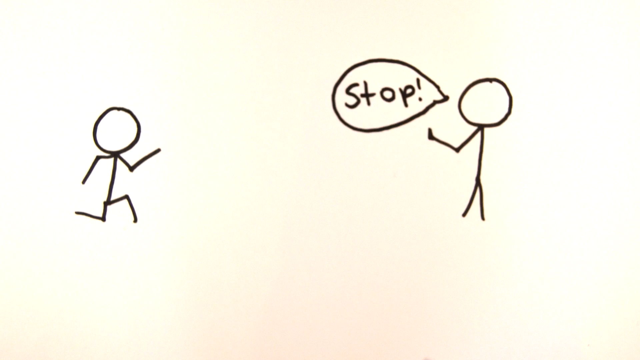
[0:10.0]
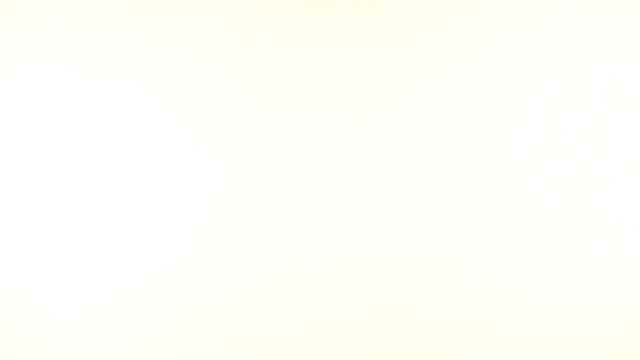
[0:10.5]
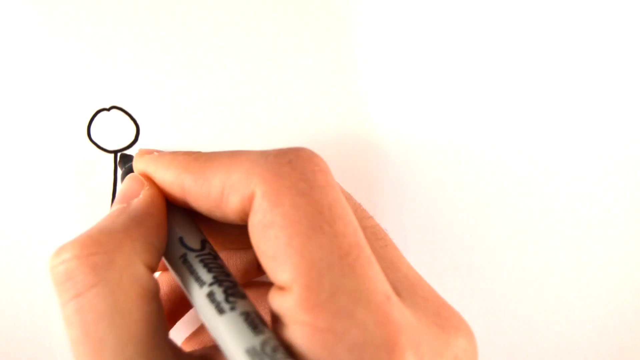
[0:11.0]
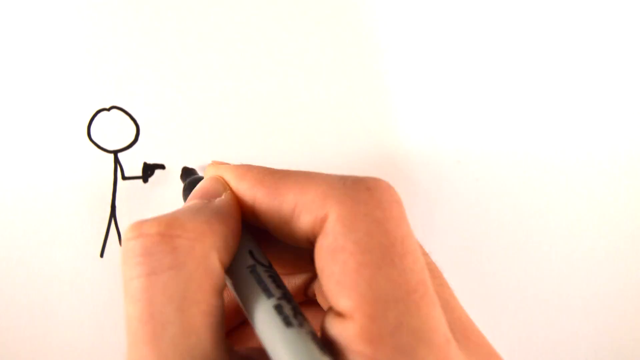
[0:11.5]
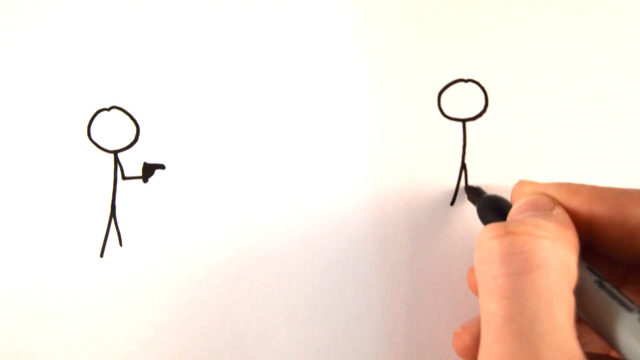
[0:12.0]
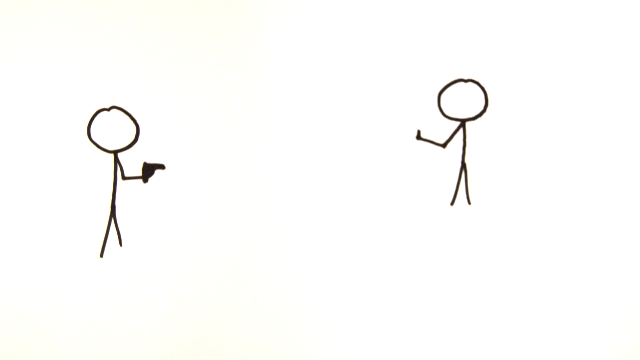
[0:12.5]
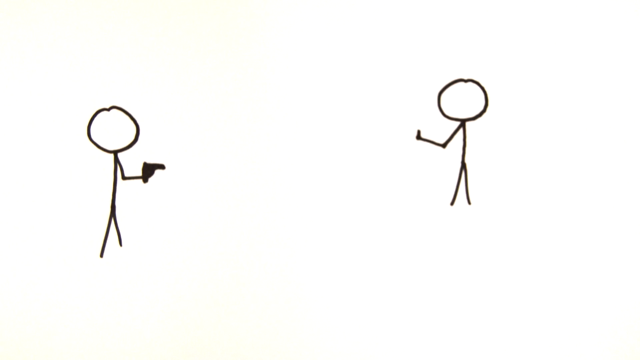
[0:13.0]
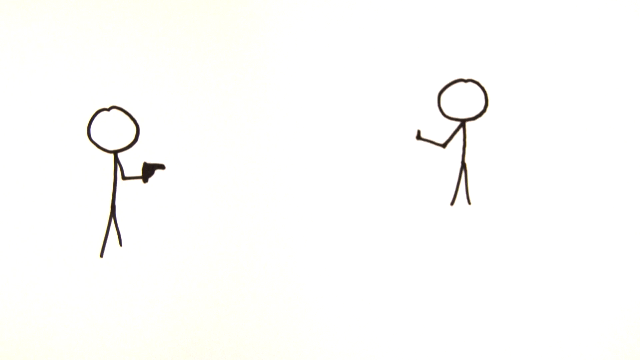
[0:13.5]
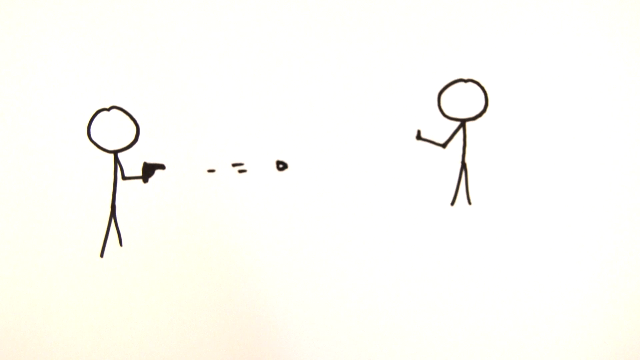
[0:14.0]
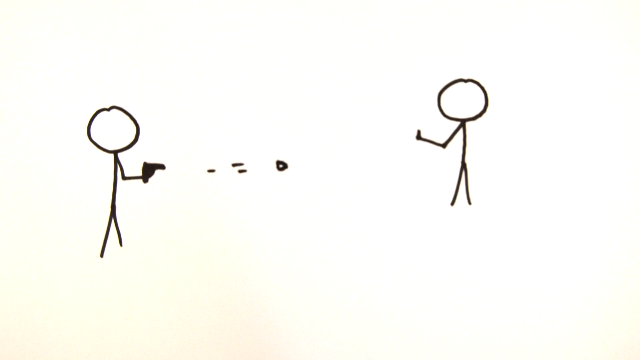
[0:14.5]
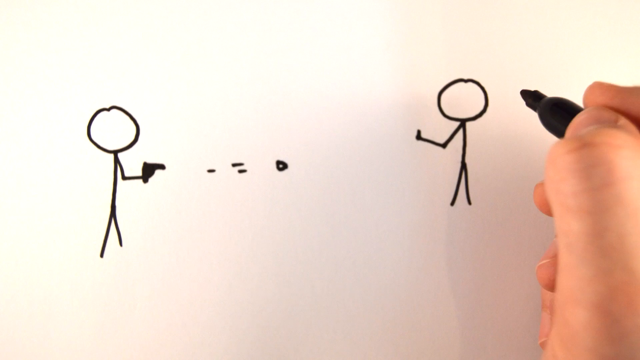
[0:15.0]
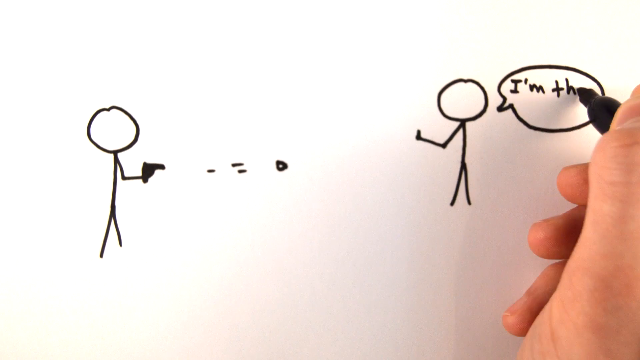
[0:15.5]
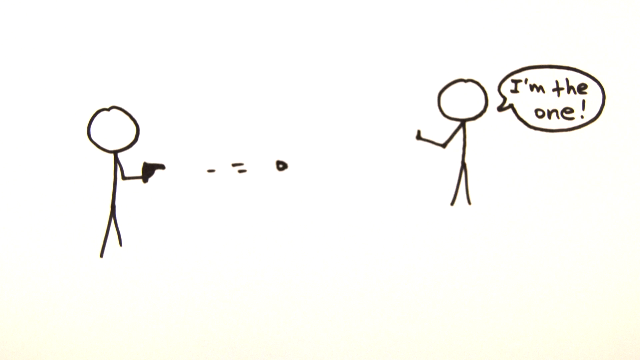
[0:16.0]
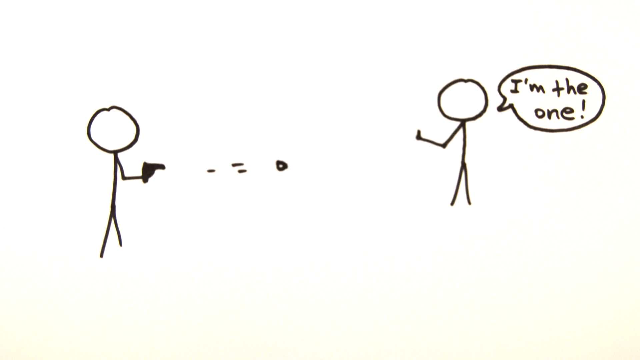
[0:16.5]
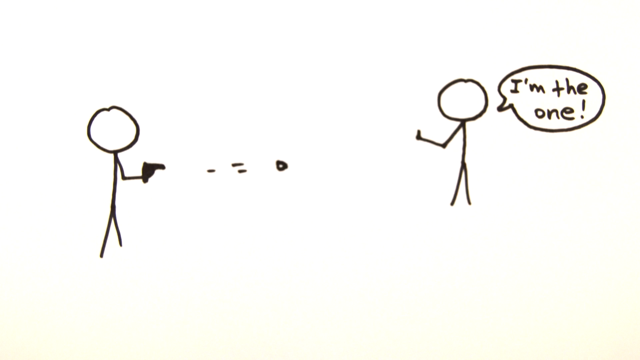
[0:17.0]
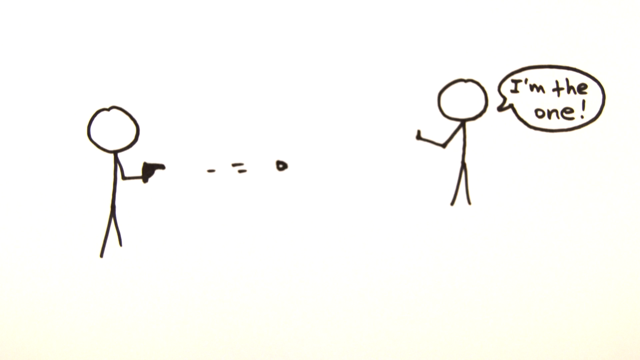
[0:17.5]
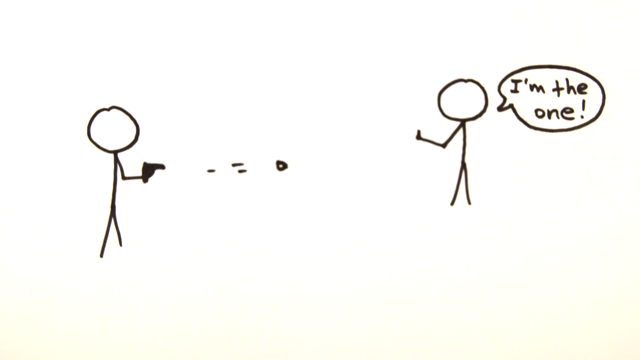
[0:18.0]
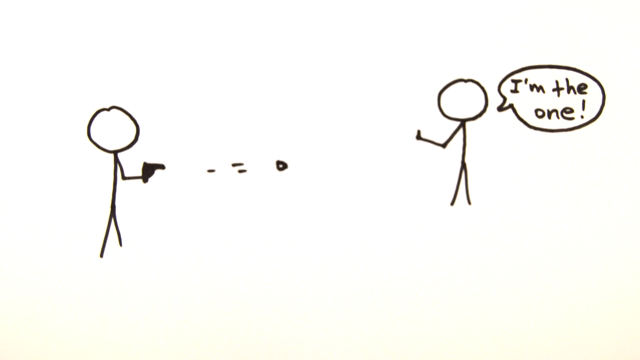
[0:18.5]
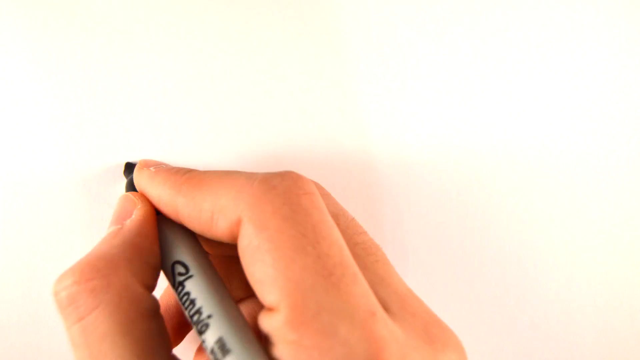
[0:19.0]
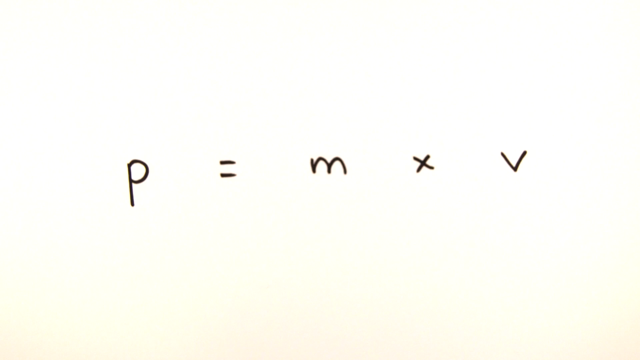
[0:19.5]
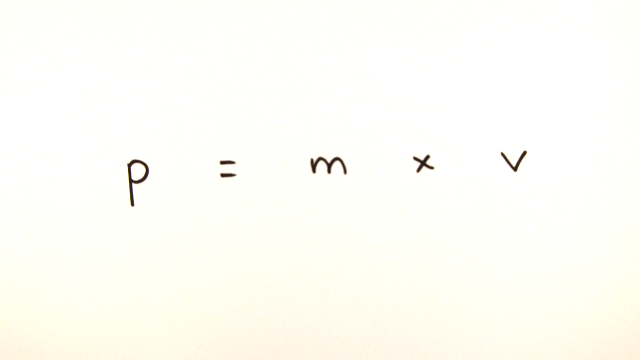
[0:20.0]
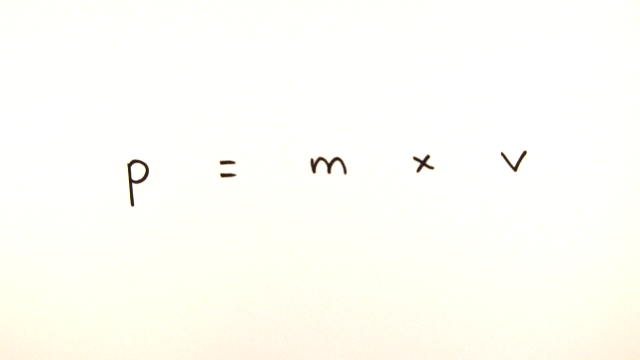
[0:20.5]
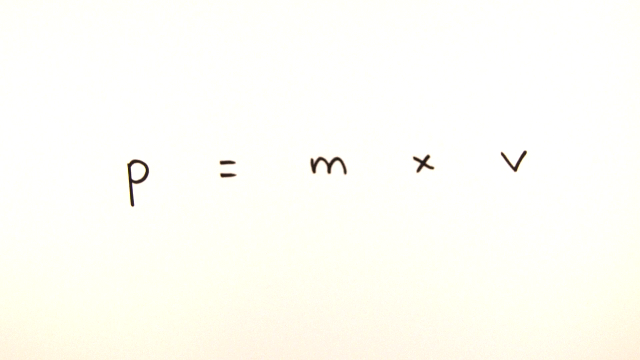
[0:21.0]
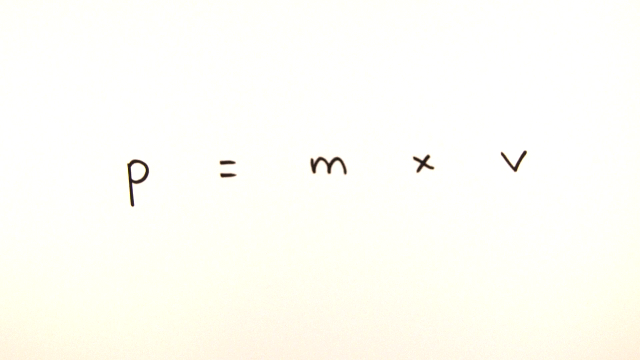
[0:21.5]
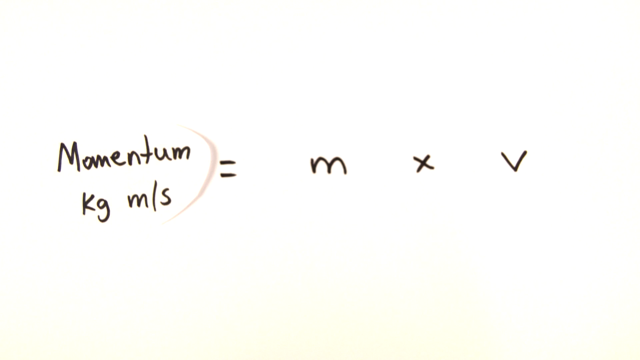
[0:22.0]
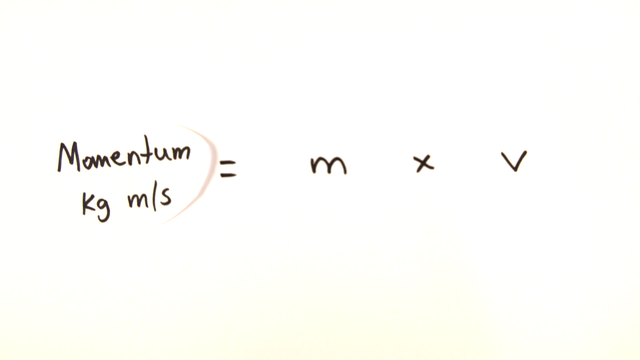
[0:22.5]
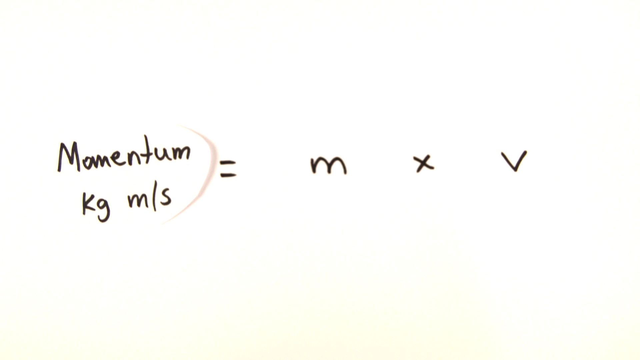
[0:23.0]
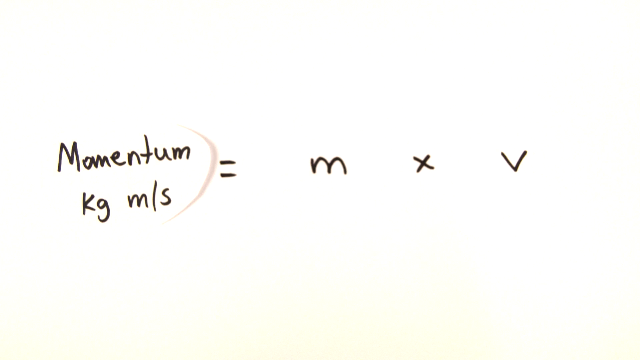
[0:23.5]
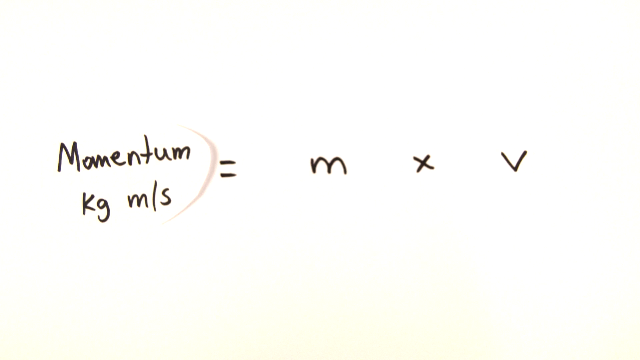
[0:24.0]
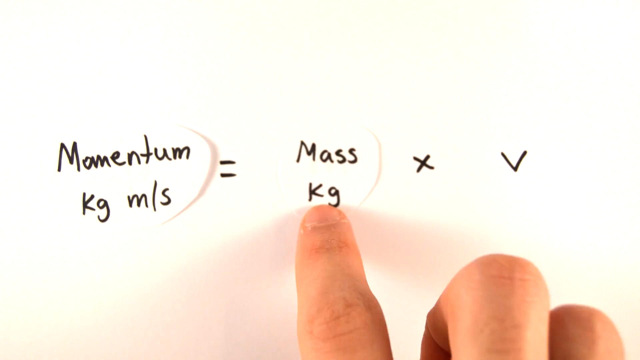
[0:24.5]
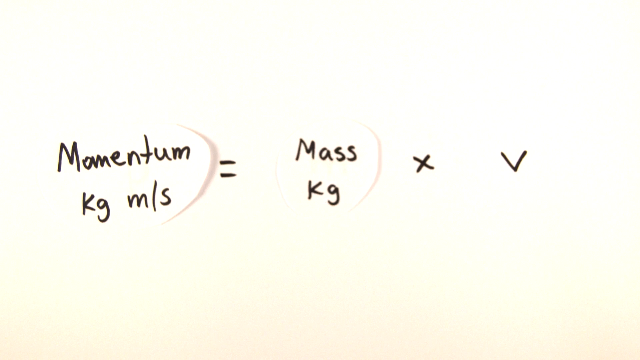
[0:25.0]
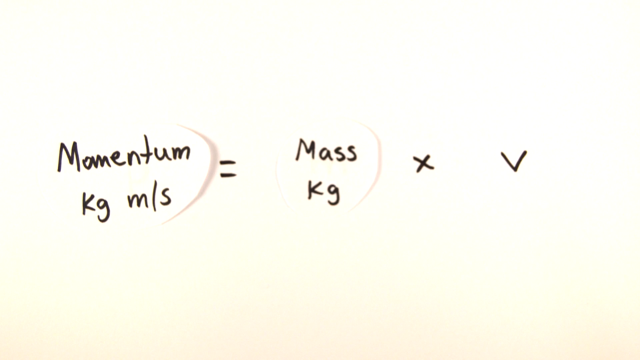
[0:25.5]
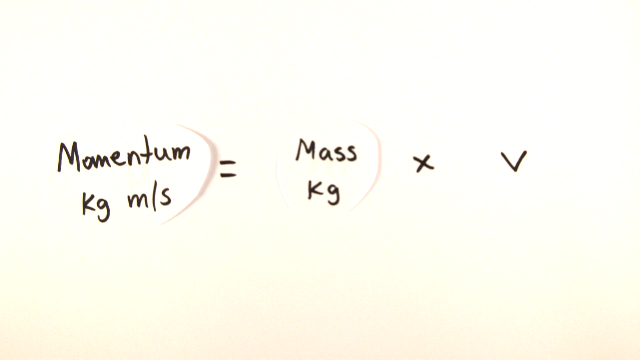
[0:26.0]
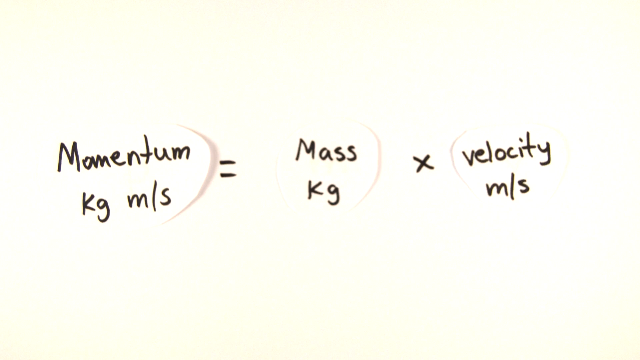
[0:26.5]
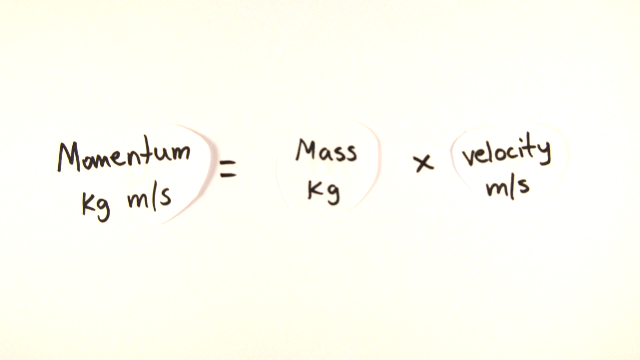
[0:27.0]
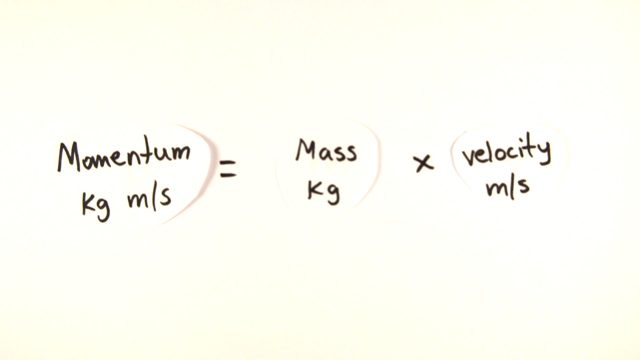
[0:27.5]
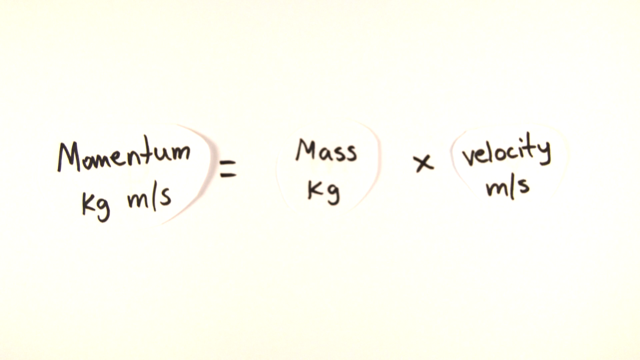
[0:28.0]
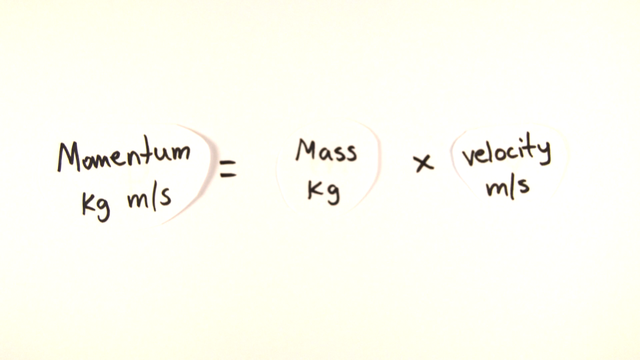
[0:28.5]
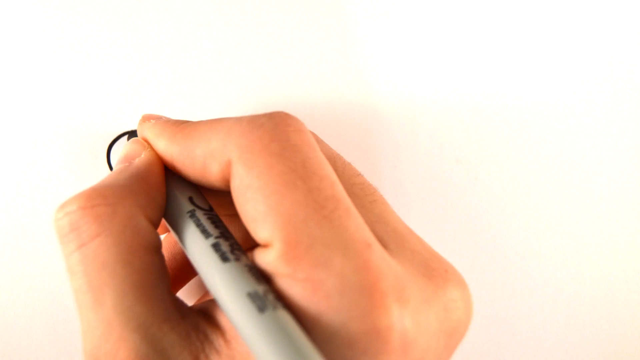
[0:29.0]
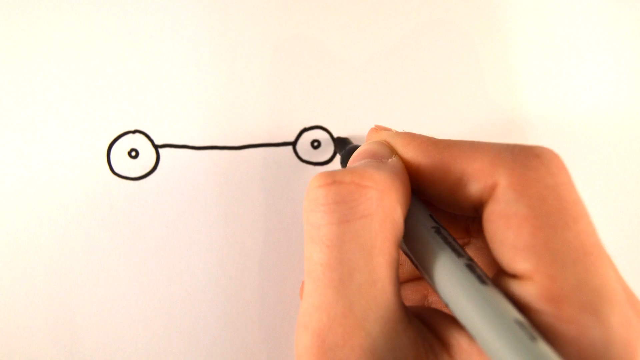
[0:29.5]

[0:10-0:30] On the white background, a stick figure on the left runs toward the right side, and a figure on the right has a hand up, apparently with the palm facing up, perpendicular to the ceiling. A text bubble says "stop!" The person then draws another figure on the left holding up a gun toward the one on the right, with something like three dashes in a circle. A text bubble is drawn for the figure on the right that says "I'm the one!" That disappears, and an equation appears: P = M × V, with "momentum kg m/s", "mass kg" and "velocity m/s". The person then starts to draw what looks like a tractor trailer with "20K" in it.